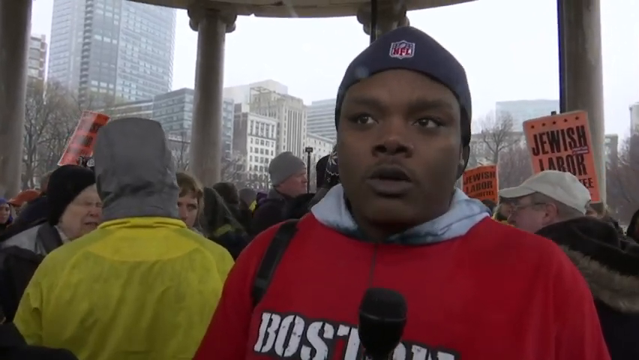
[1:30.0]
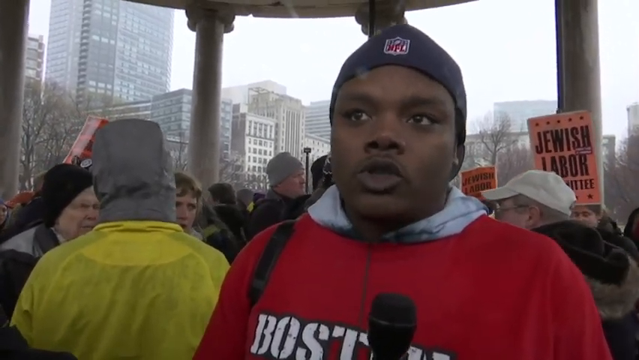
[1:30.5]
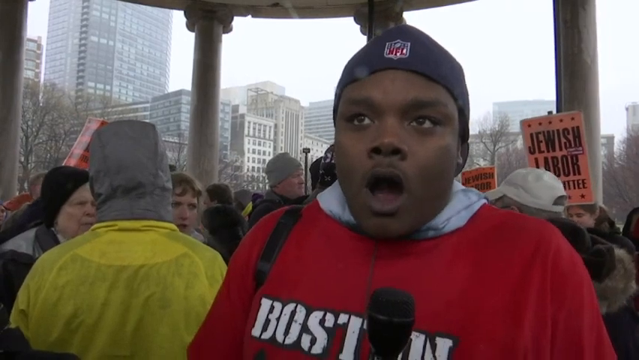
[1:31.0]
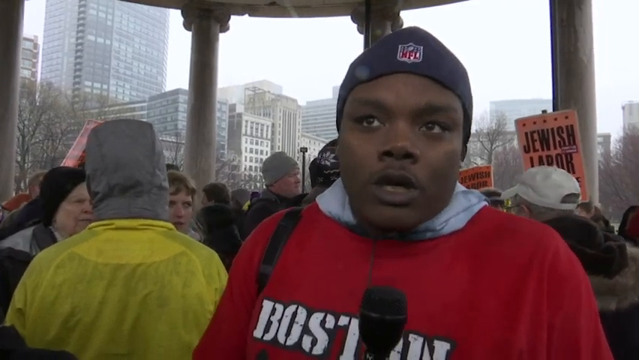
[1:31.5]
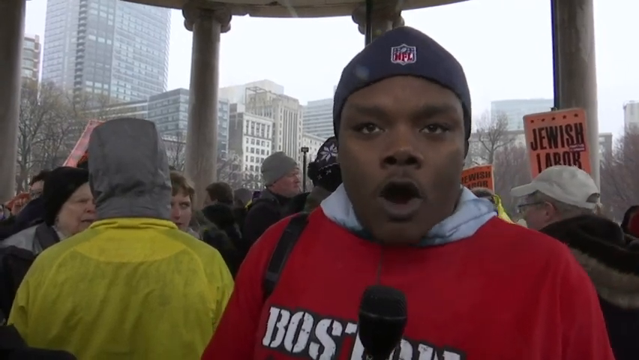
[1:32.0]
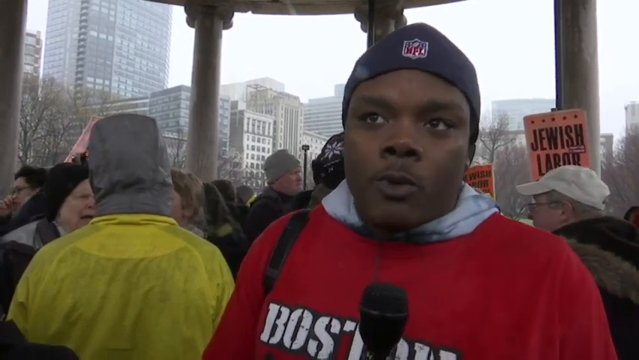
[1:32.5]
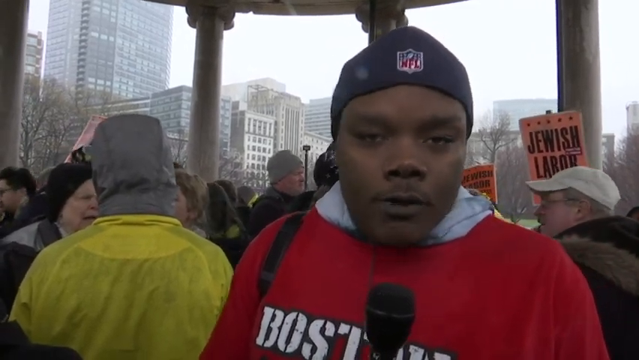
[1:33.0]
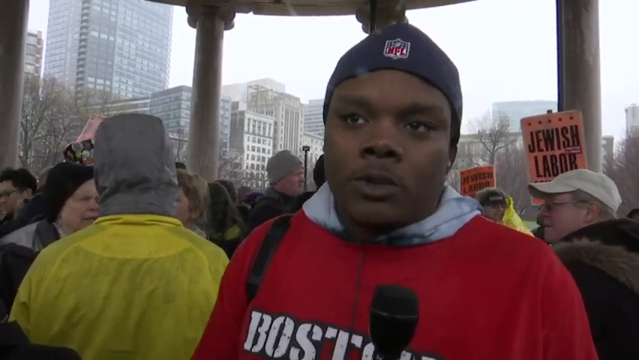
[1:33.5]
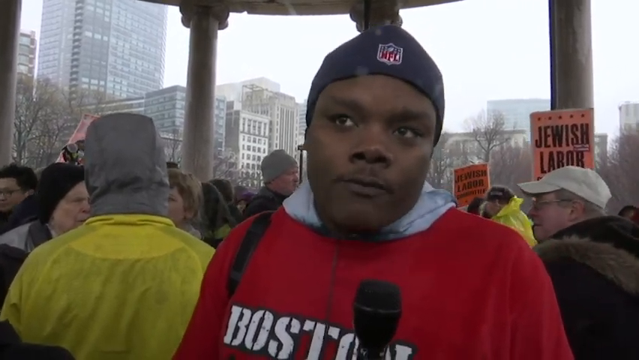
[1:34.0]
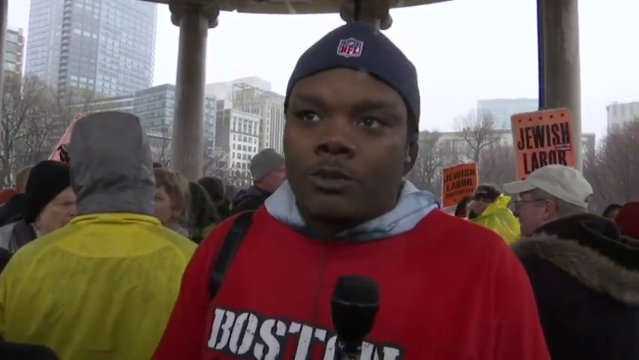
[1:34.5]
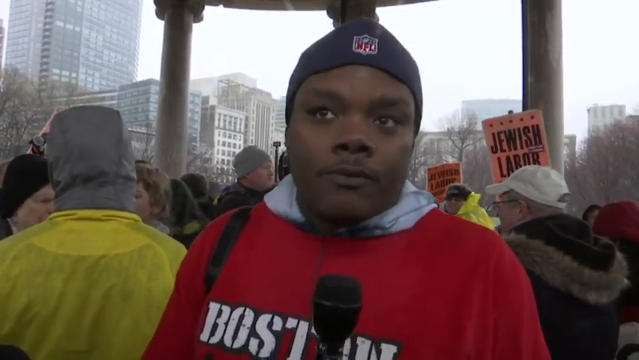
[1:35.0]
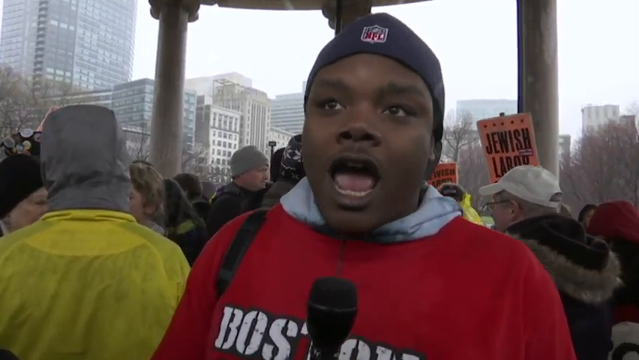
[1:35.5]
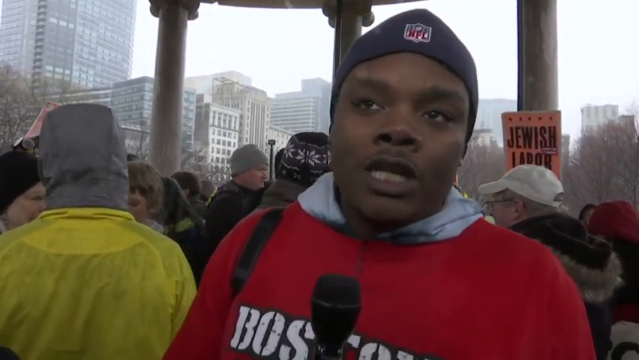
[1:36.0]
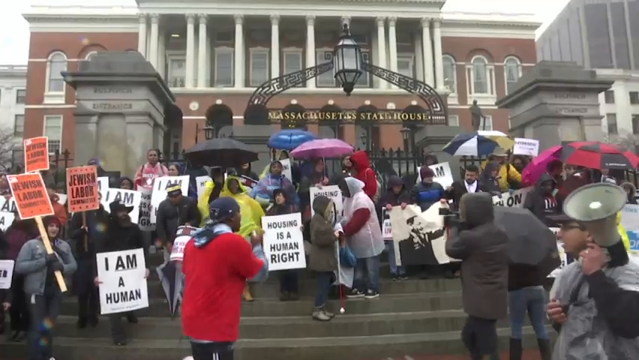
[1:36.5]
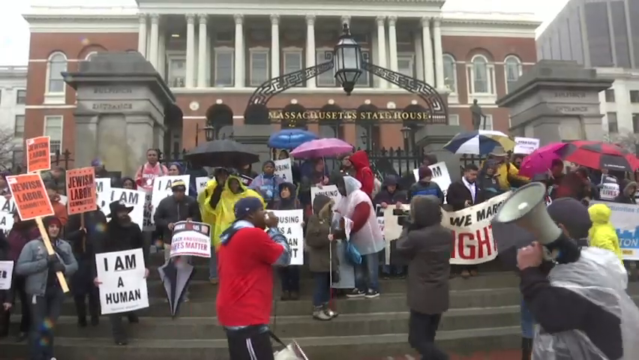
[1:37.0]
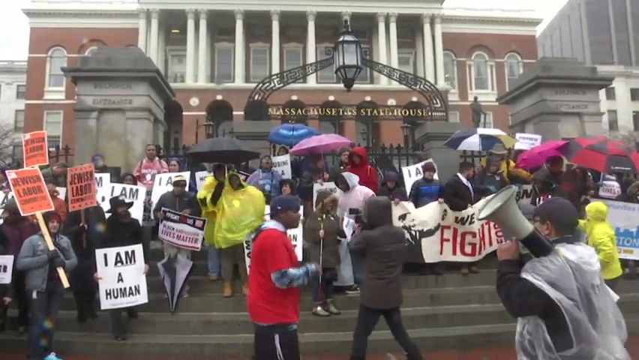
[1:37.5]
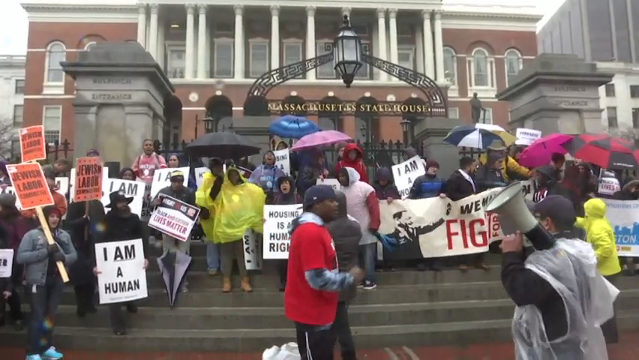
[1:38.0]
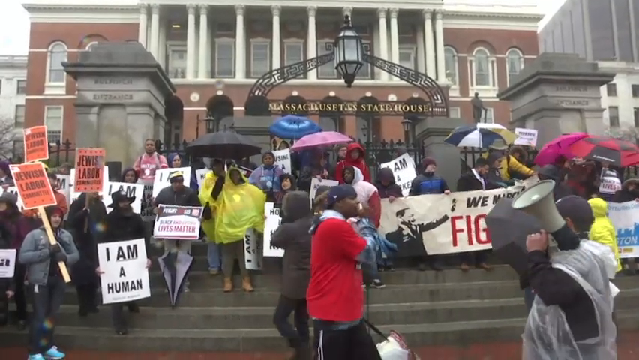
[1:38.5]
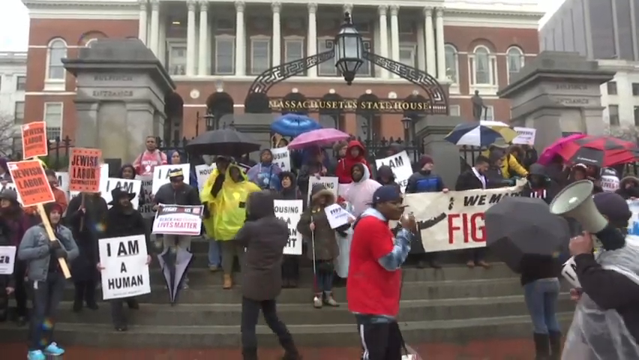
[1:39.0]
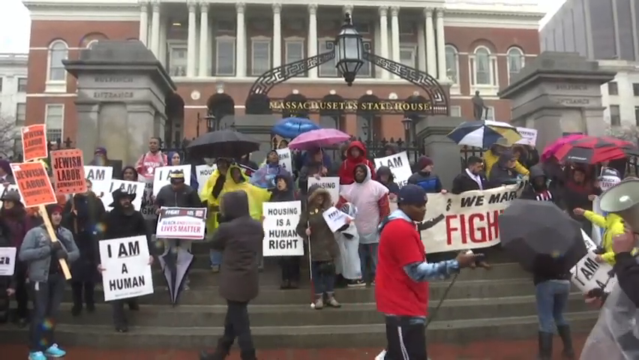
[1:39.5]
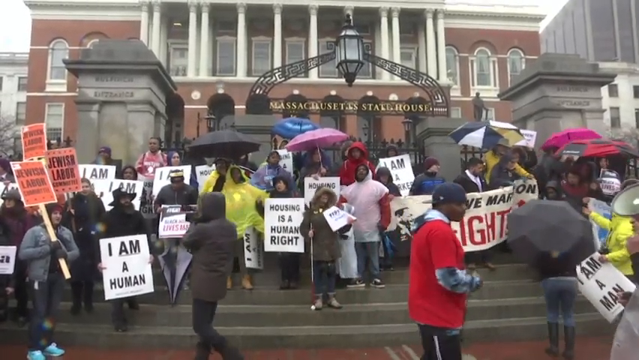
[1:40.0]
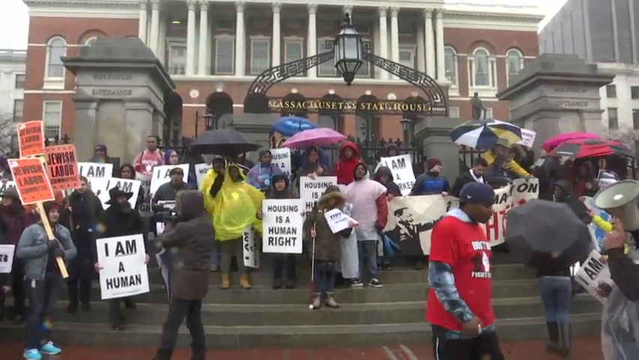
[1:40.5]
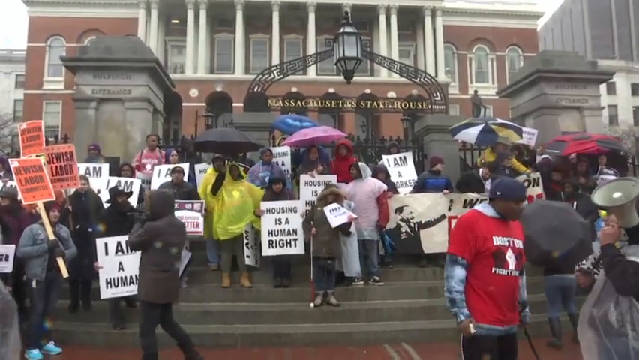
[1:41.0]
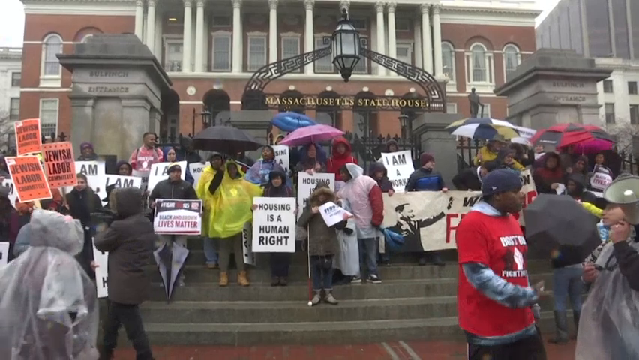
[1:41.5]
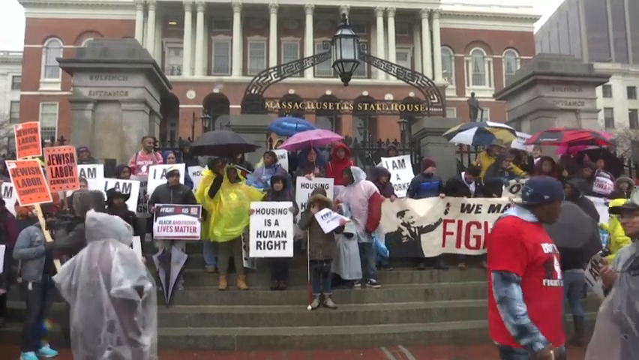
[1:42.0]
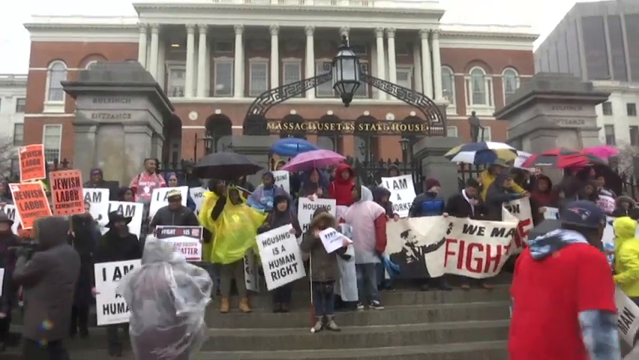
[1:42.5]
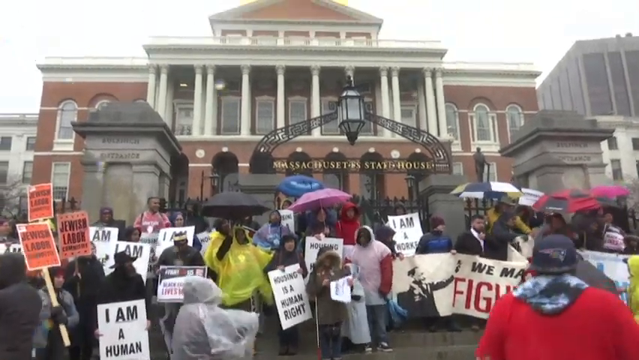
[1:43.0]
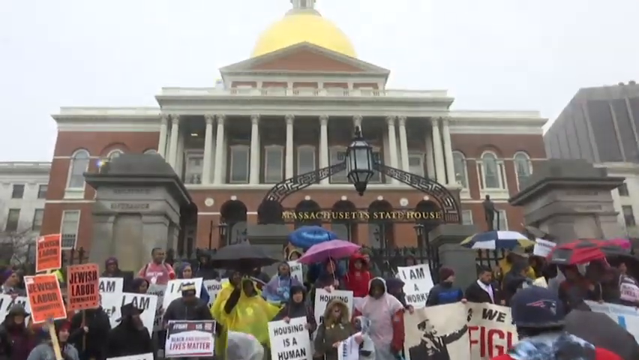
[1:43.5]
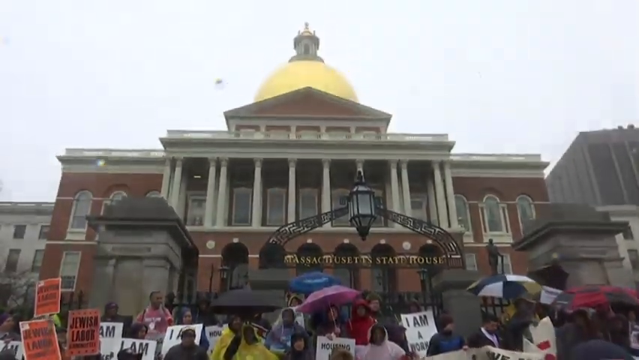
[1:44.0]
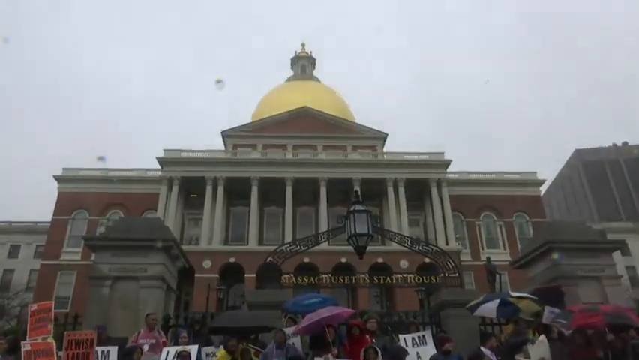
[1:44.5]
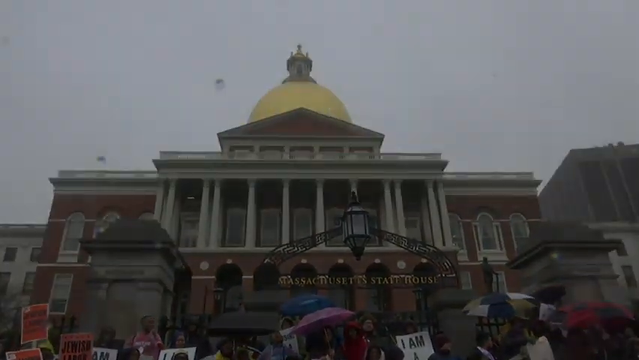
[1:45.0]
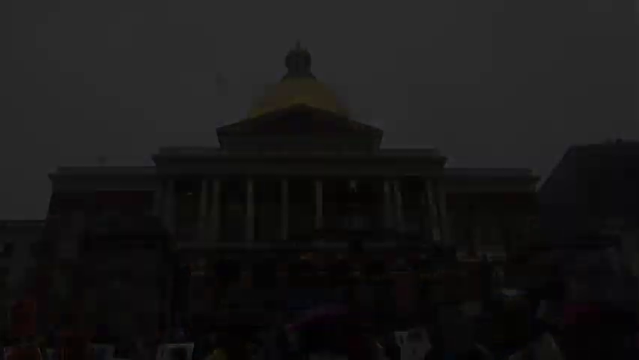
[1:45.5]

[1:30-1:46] The rally appears to be in the city of Boston, with some skyscrapers in the background on a rainy day. Many people are gathered, and the Massachusetts State House is visible, with people gathered on its stairs. One sign reads "I am human" and another "housing is a human right". Orange Jewish labor signs are held up, and "we fight for 15" is visible. People stand with microphones and megaphones, with lots of umbrellas and heavy jackets in the cold weather. A large banner reads "we march on, we fight for 15" with a photo of Dr. Martin Luther King Jr. to the left. The video shows the Massachusetts State House as the camera pans up and fades out.